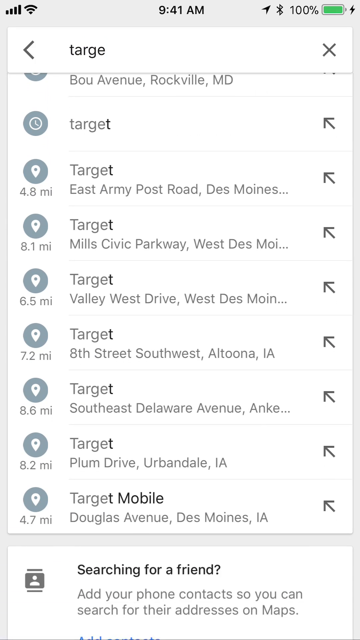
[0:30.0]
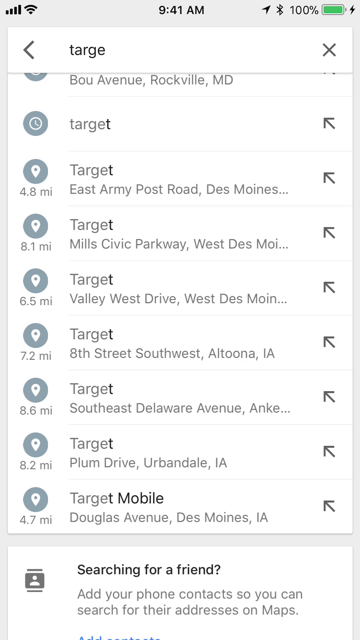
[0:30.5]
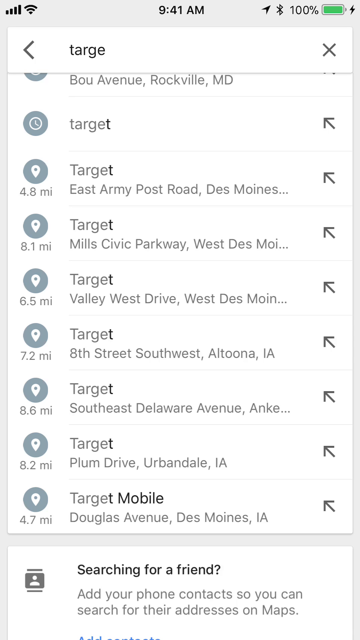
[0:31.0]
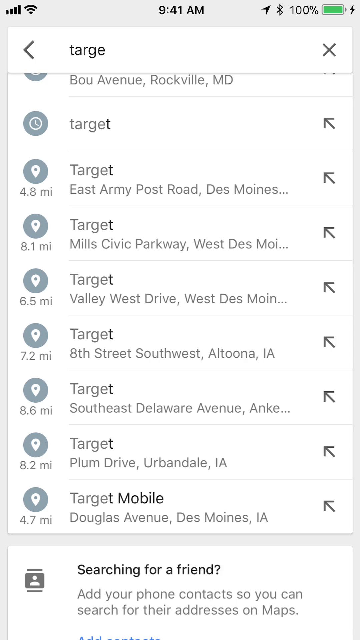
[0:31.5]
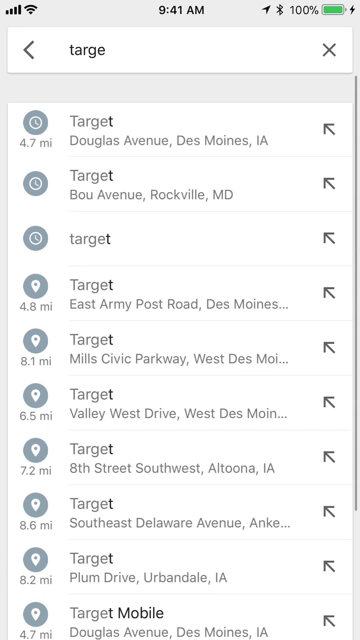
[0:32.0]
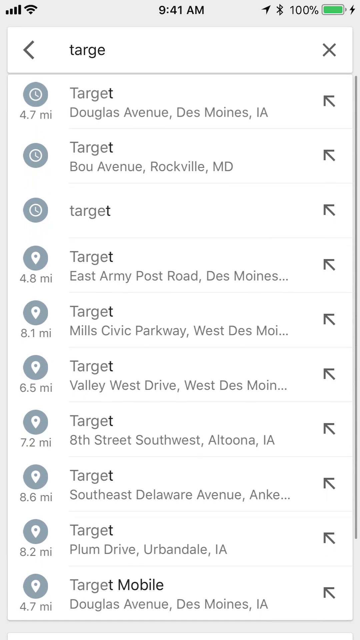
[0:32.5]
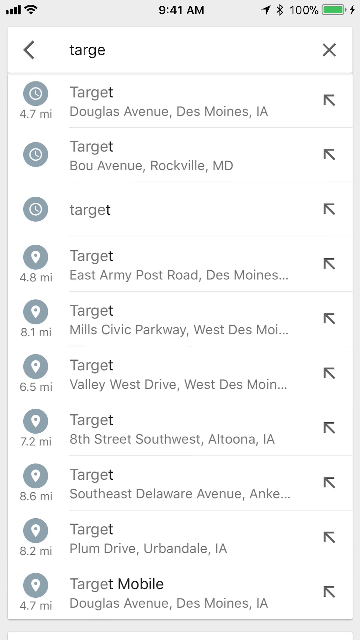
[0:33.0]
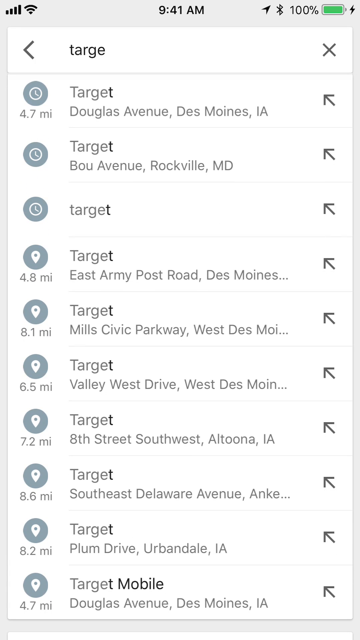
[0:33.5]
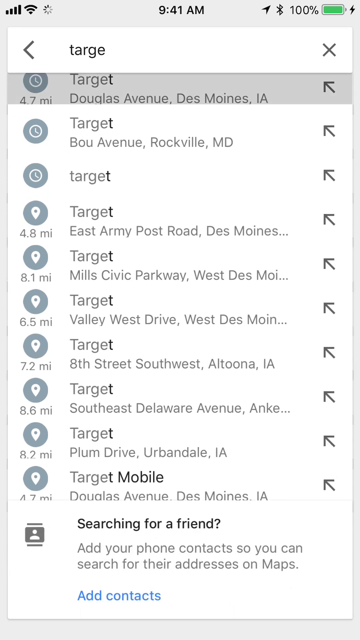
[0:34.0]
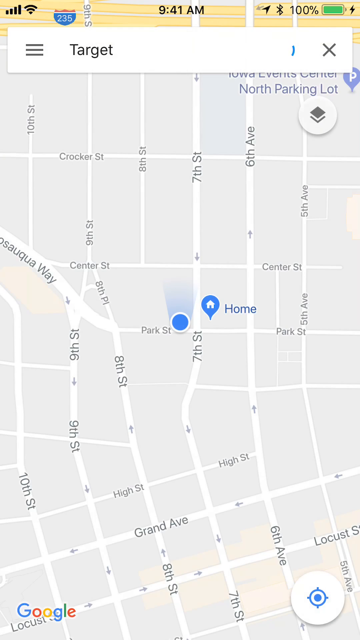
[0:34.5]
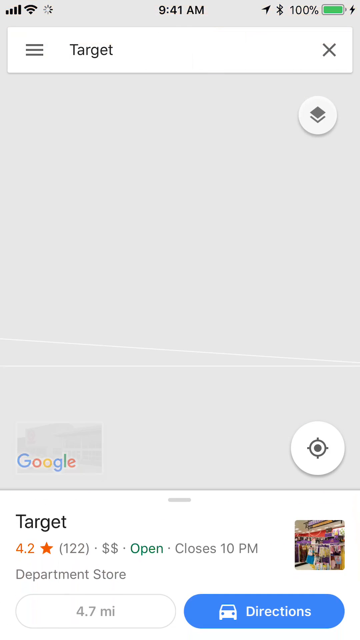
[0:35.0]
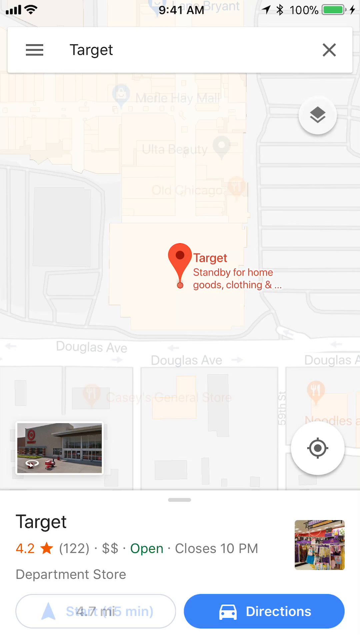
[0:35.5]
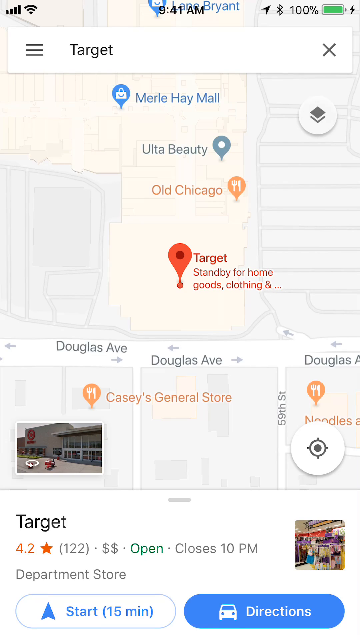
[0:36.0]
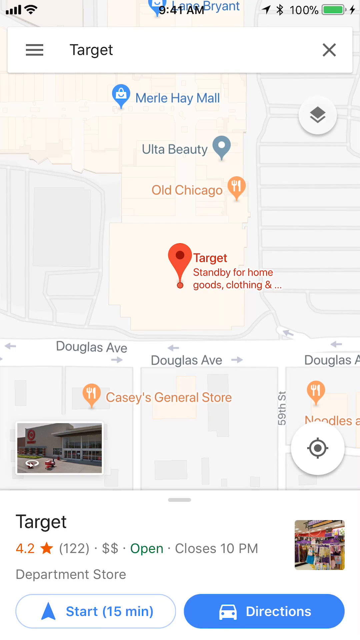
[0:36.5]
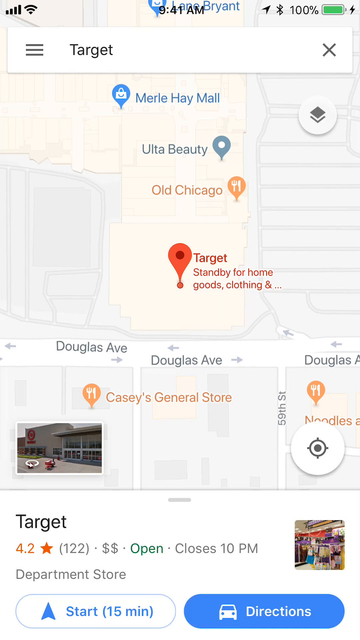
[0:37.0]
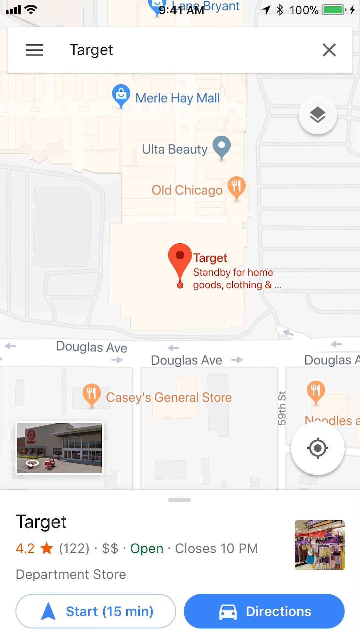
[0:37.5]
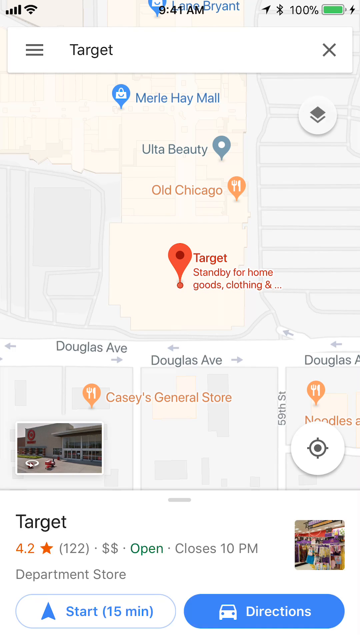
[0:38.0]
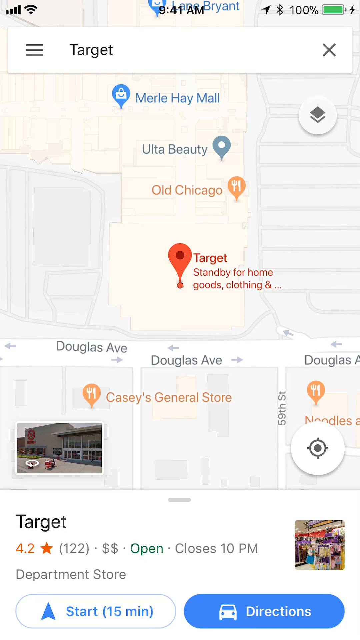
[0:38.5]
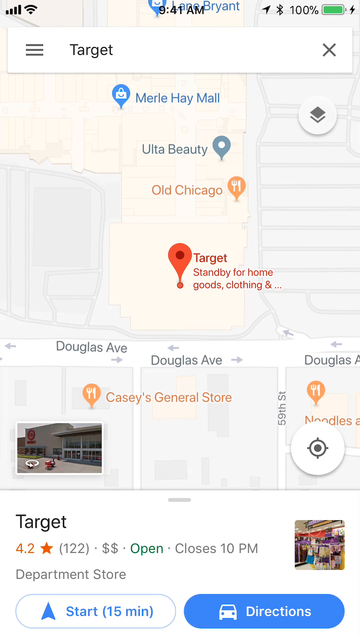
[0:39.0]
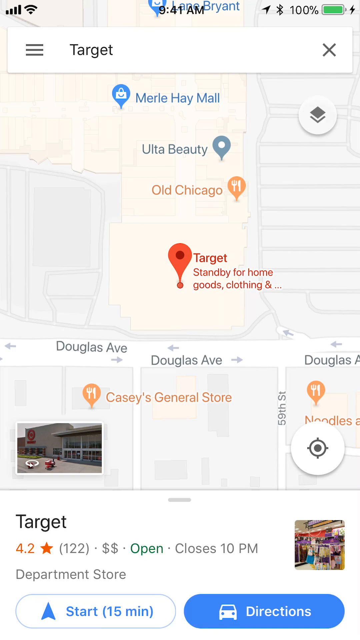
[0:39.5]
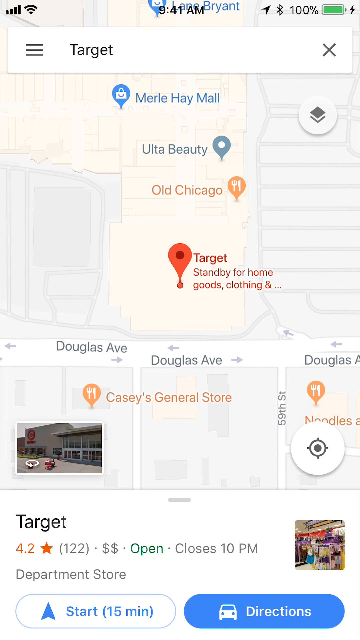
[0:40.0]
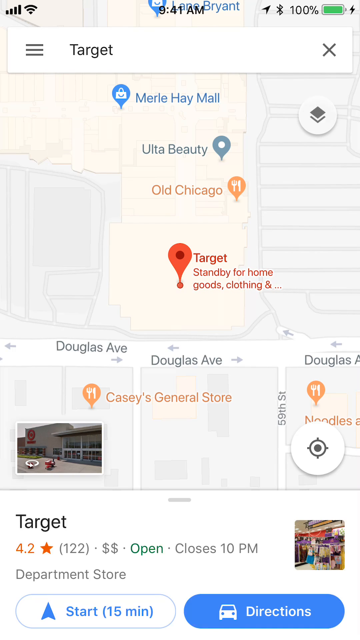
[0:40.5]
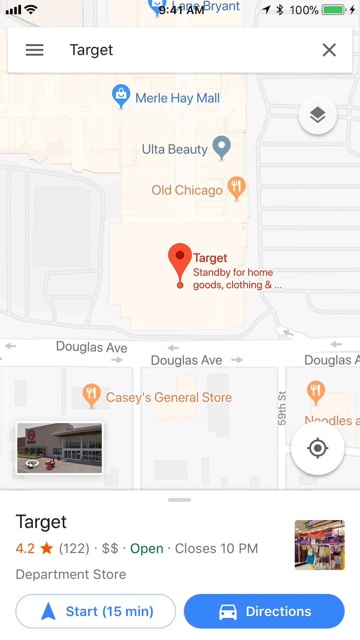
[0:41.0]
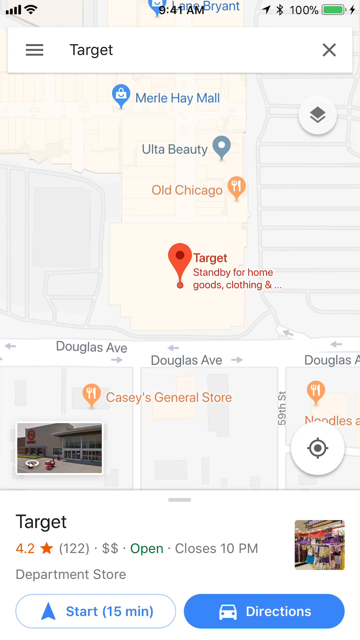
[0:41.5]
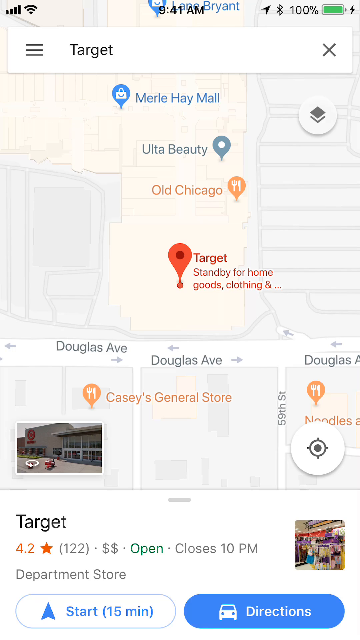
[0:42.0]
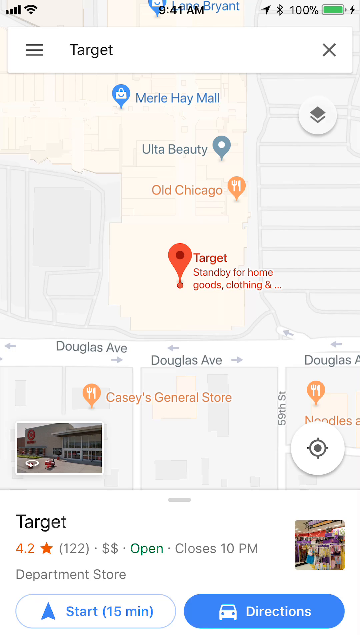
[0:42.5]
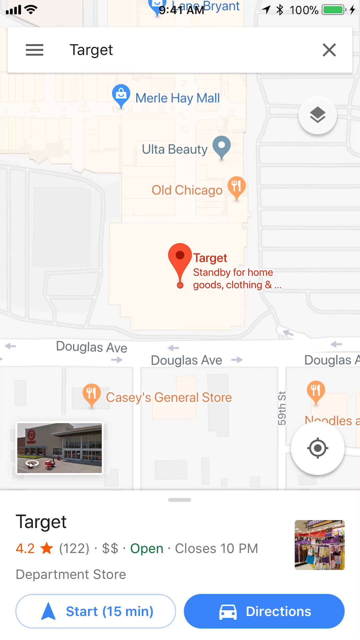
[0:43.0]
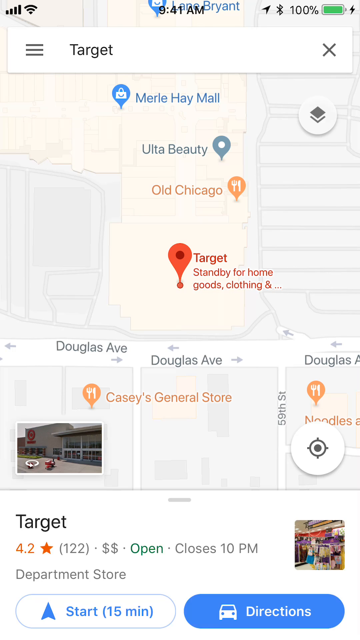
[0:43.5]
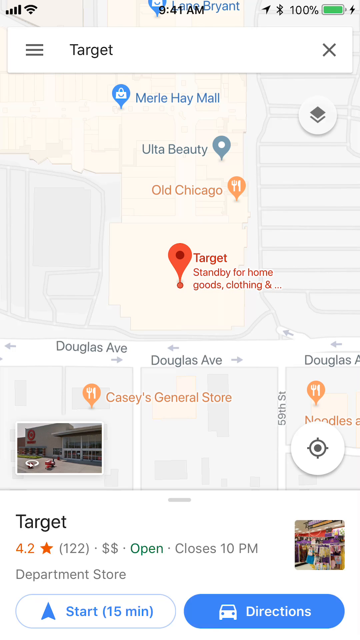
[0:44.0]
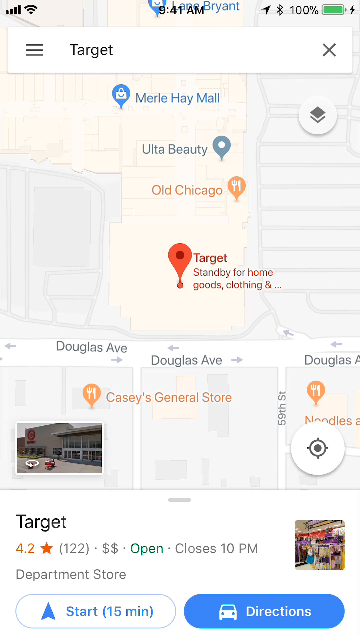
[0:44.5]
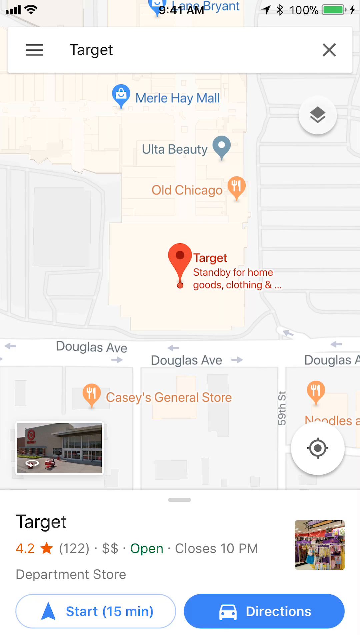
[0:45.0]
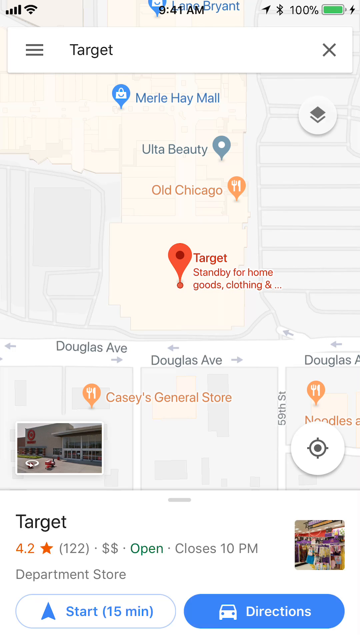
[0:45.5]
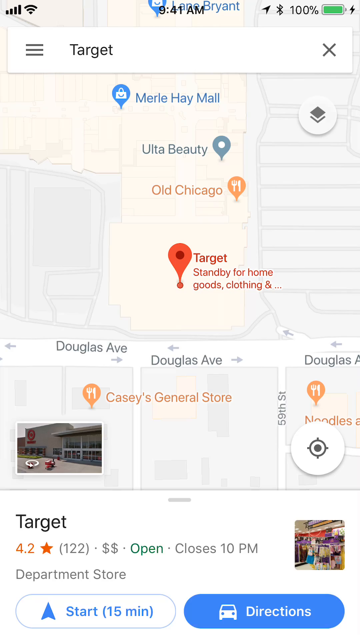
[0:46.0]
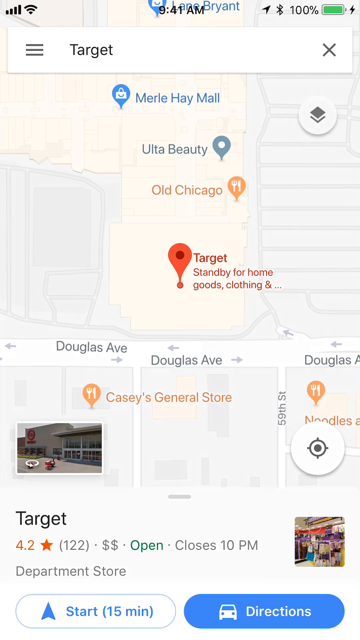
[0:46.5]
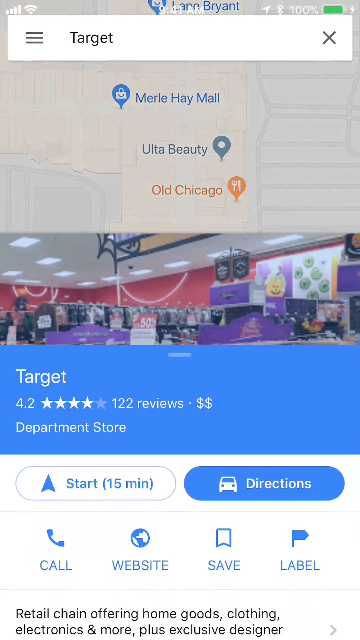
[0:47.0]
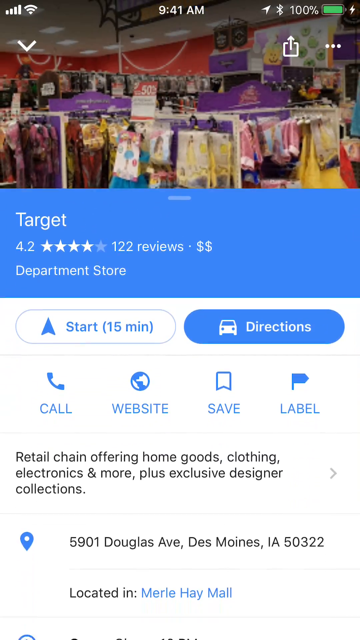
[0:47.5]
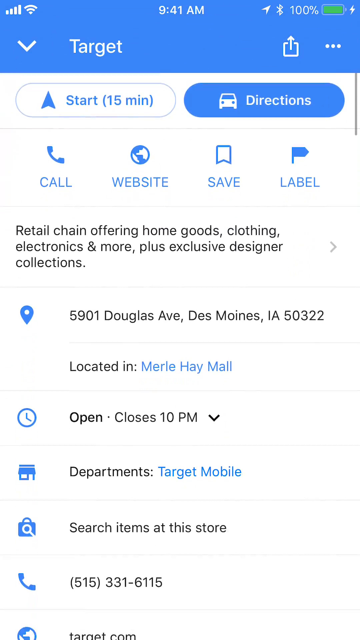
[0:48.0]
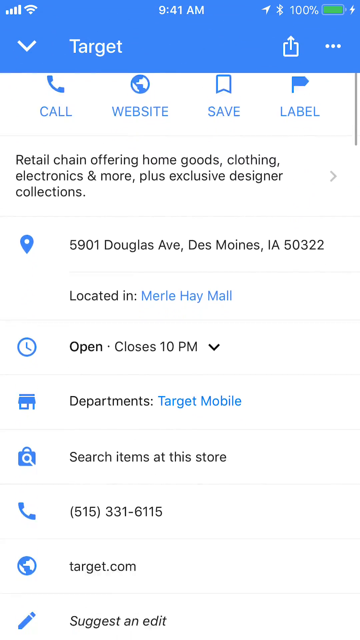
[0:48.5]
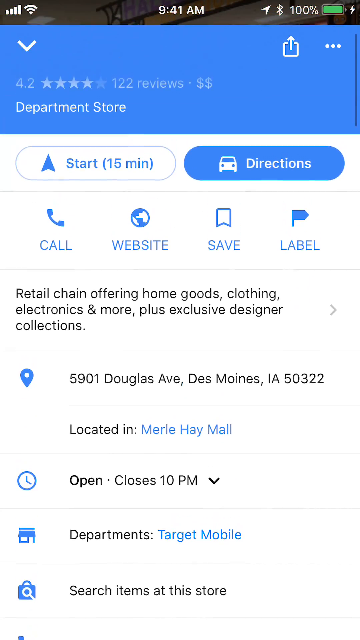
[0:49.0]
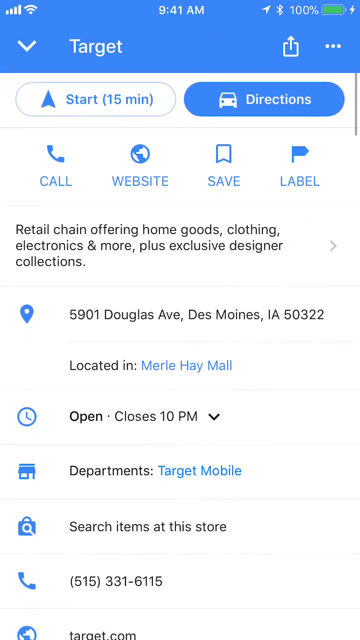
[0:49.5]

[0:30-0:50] The search results show many Target store locations and their distance in miles from the user in a drop-down. The user seems to press search, and the view changes to a map of a Target store with a red pin dropped over the location. Beneath it is a photo showing the street view of the Target store, and below that, at the very bottom of the Google Maps app, is an information card. It says "target", beneath that "4.2 stars", and in parentheses "122". It indicates the store is open but closes at 10 p.m., and it is labeled as a department store. Two buttons are at the very bottom of the screen: one says "start, 15 minutes" and the other says "directions". The user appears to tap the word "target" at the bottom of the screen, which enlarges the information panel; it slides upward, revealing more options, including "Call", "Website", "Save" and "Label". There is also information about the address, the hours and the phone number of this Target location.